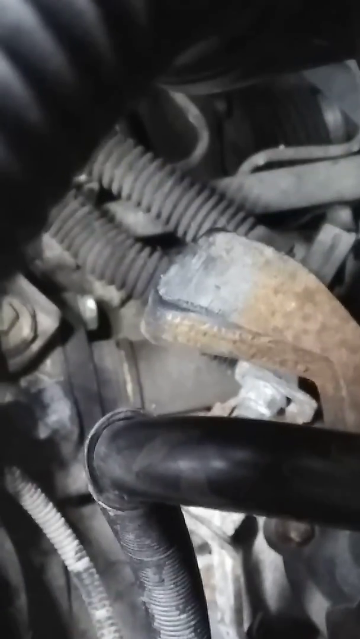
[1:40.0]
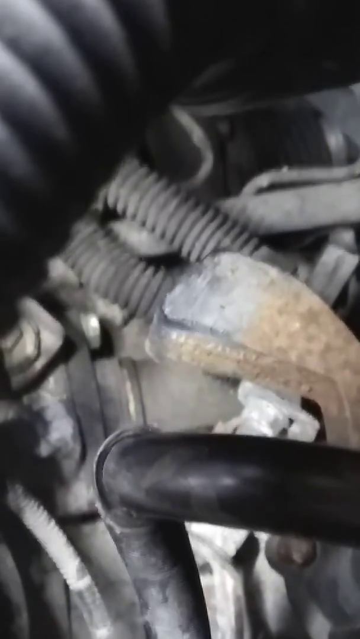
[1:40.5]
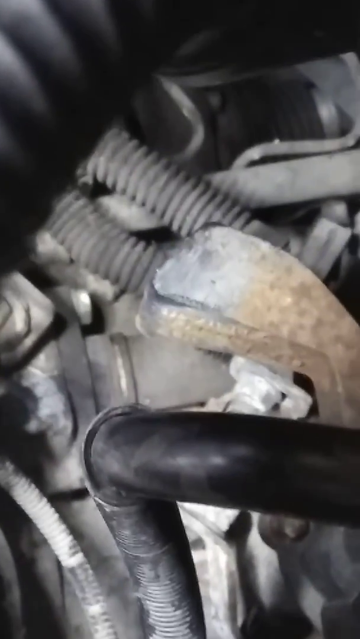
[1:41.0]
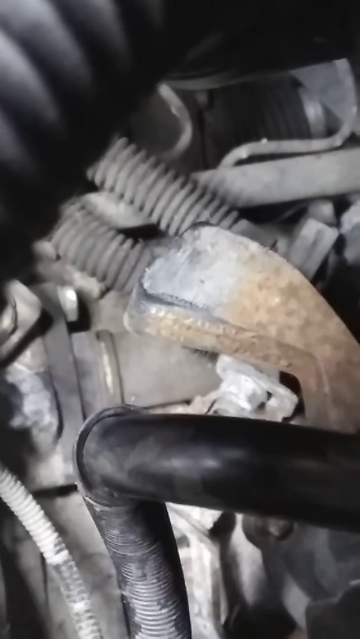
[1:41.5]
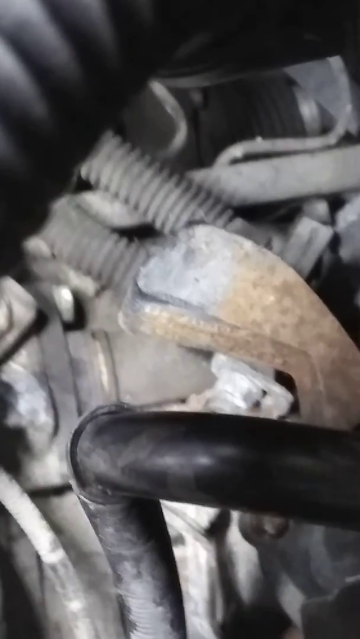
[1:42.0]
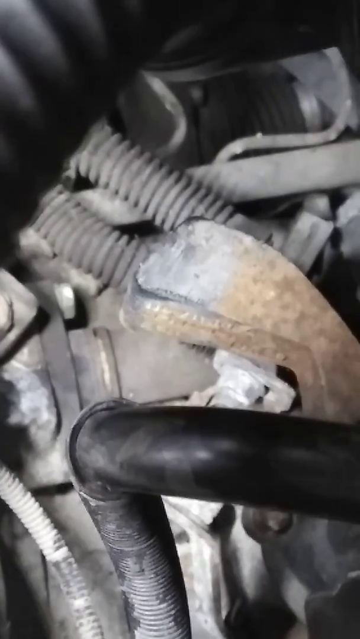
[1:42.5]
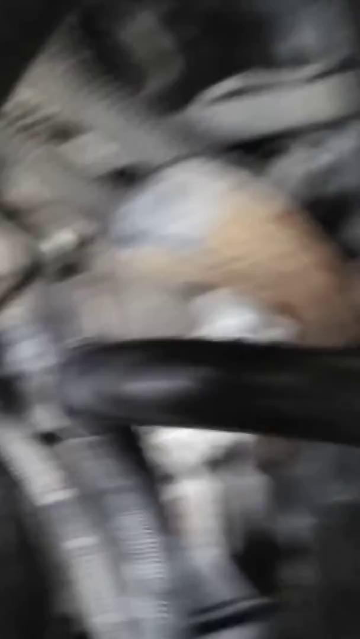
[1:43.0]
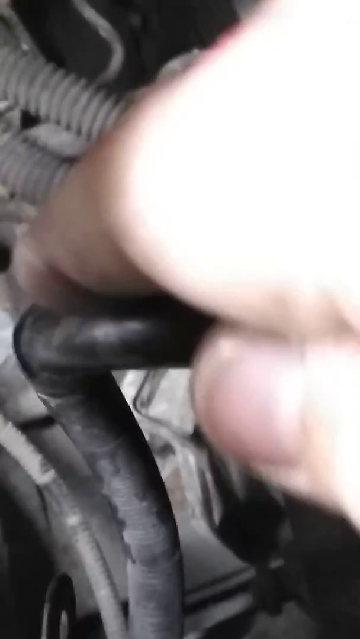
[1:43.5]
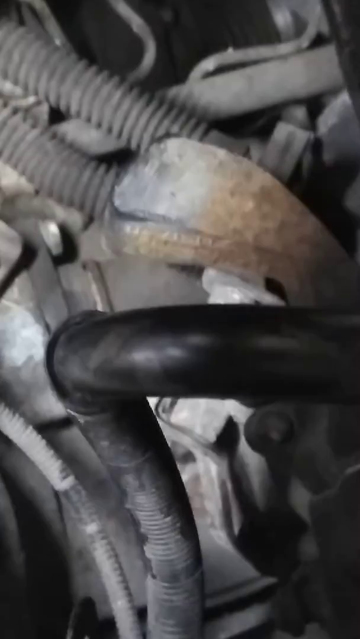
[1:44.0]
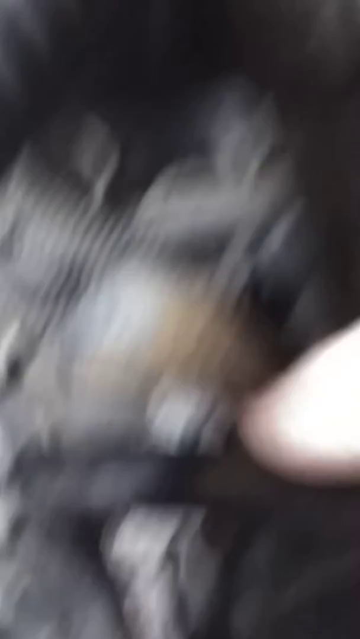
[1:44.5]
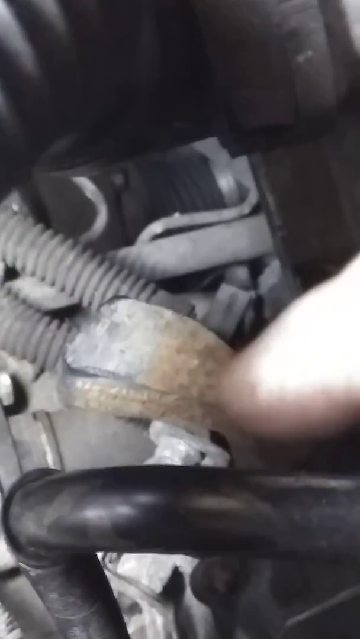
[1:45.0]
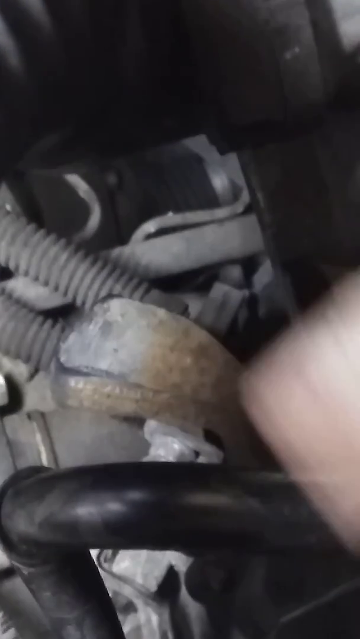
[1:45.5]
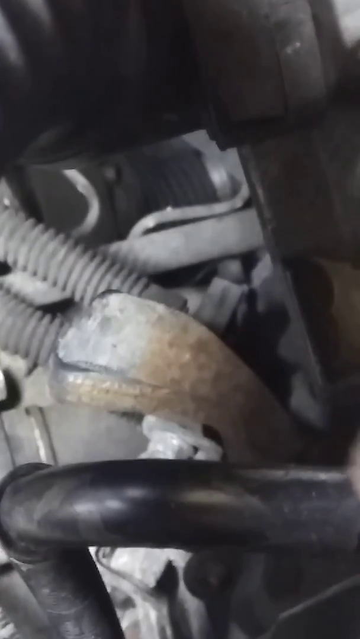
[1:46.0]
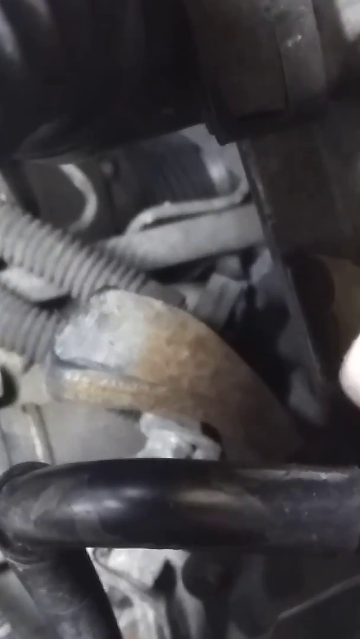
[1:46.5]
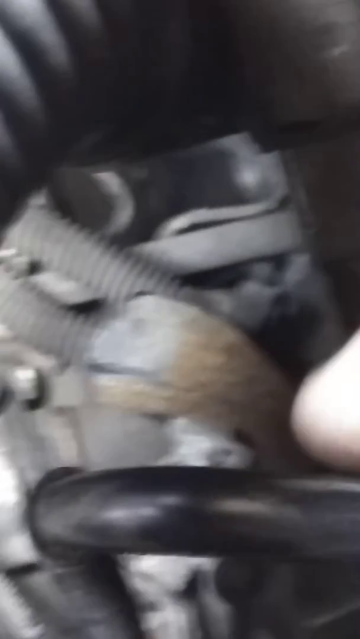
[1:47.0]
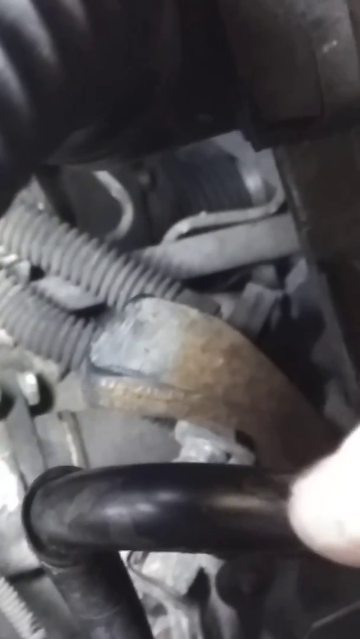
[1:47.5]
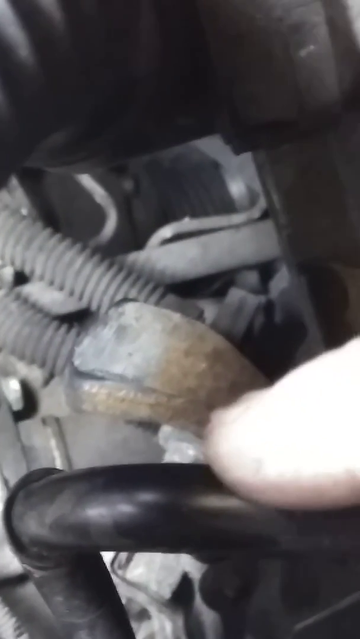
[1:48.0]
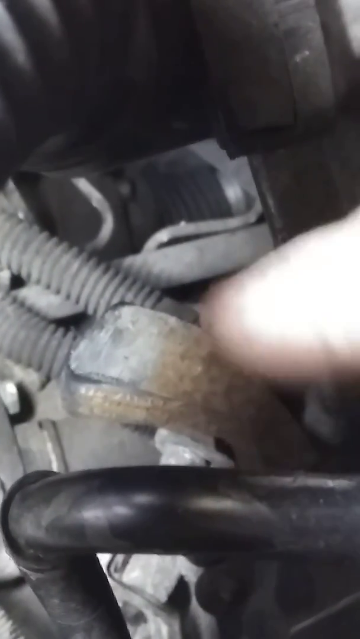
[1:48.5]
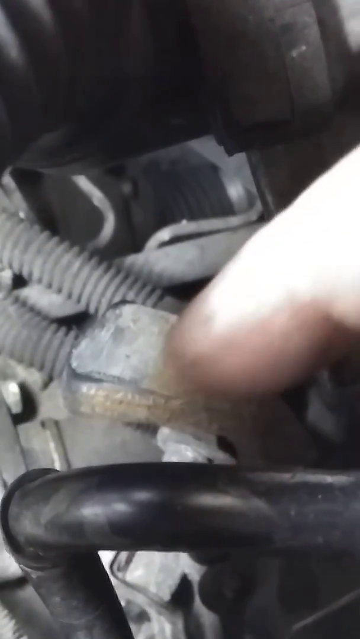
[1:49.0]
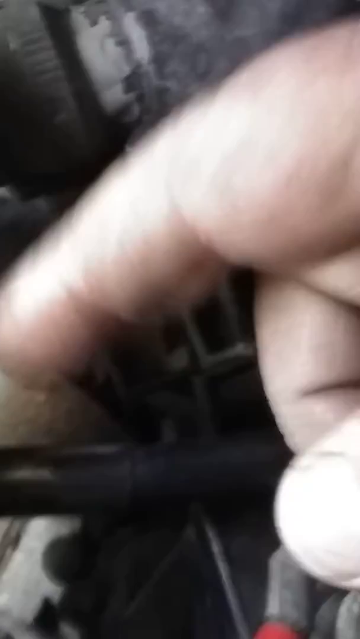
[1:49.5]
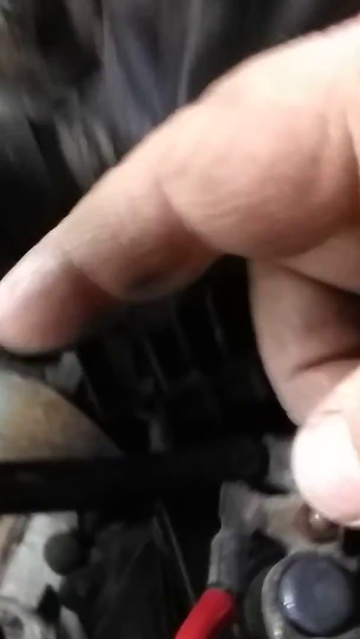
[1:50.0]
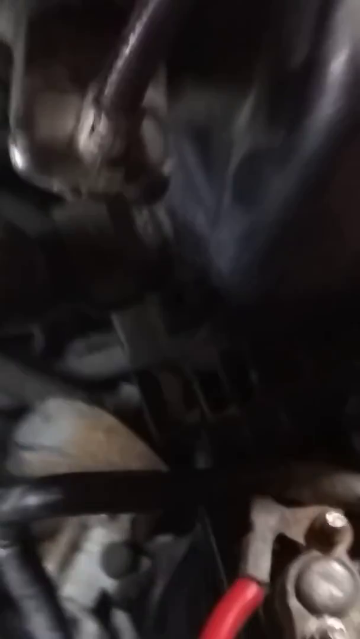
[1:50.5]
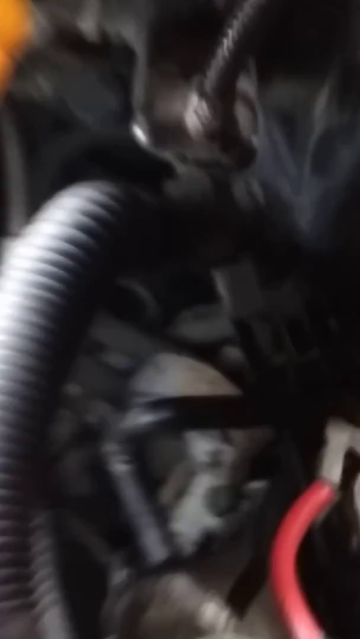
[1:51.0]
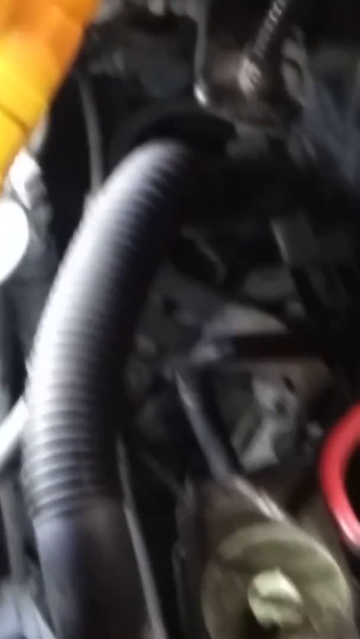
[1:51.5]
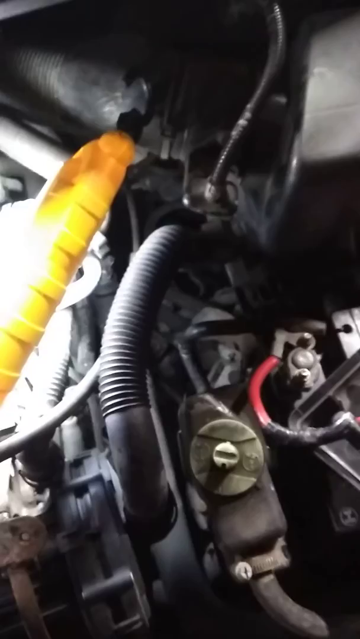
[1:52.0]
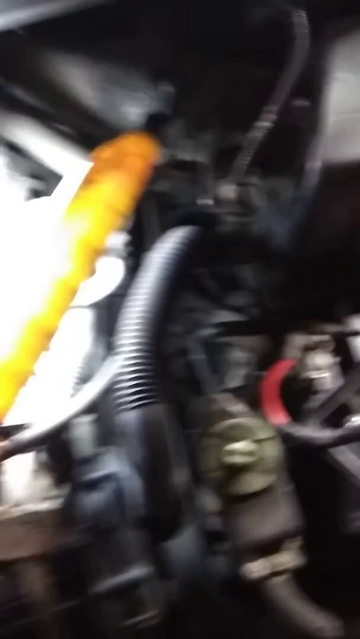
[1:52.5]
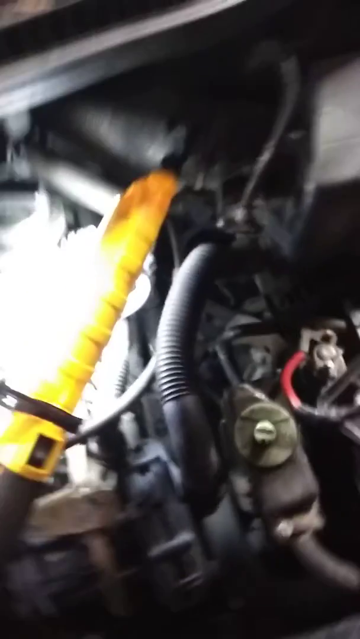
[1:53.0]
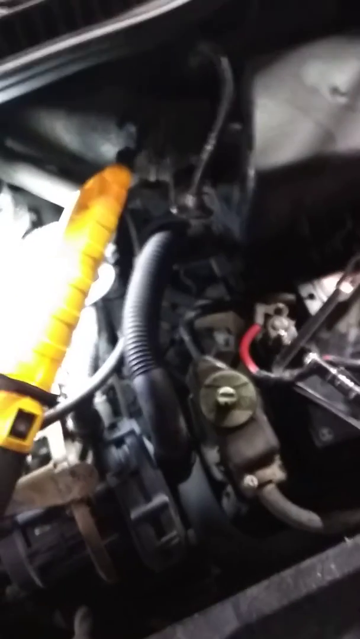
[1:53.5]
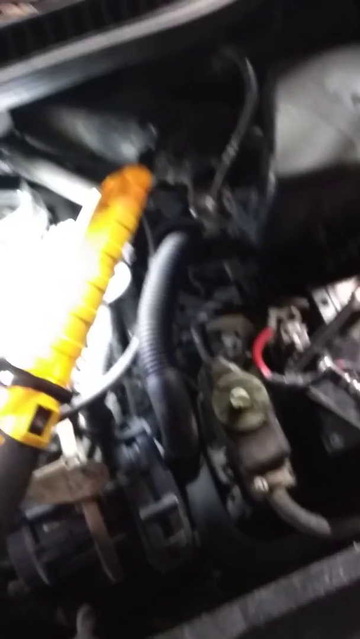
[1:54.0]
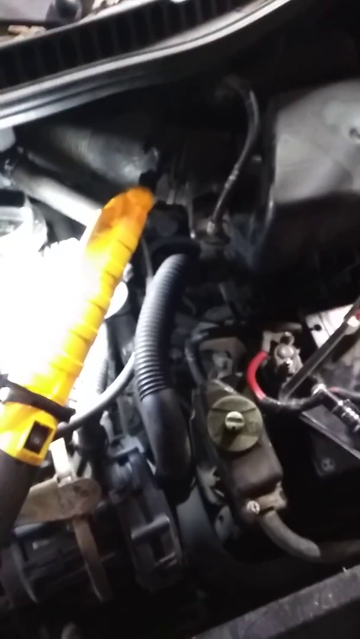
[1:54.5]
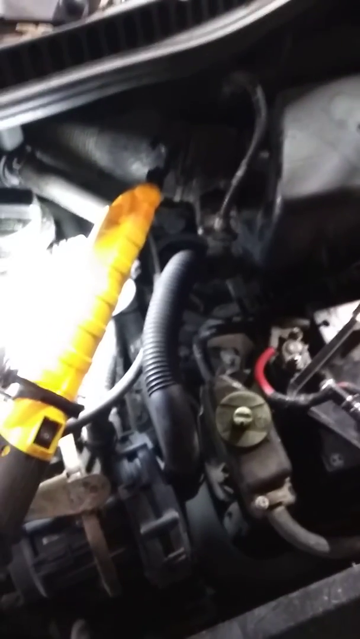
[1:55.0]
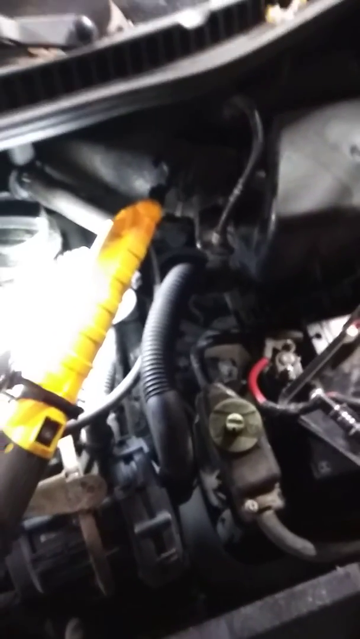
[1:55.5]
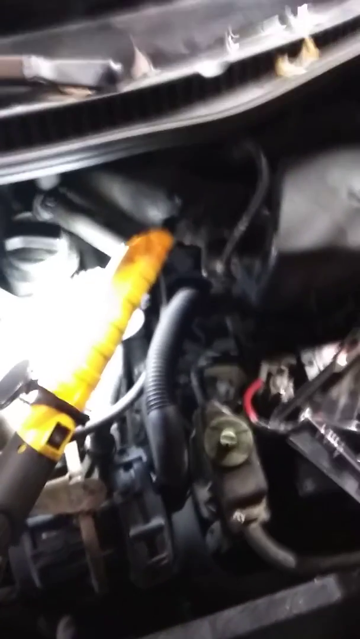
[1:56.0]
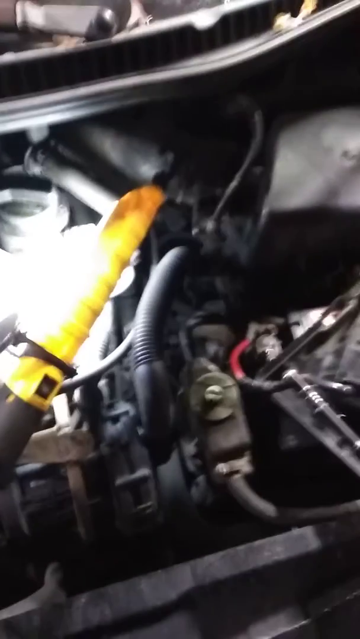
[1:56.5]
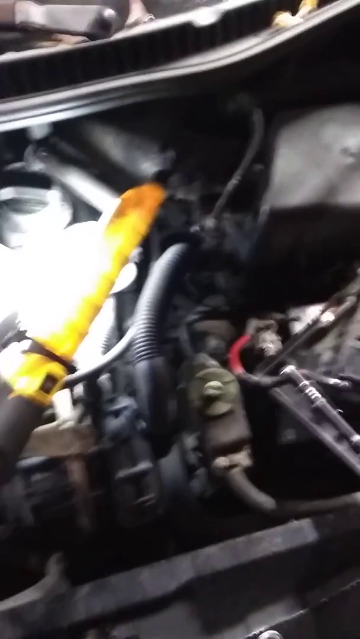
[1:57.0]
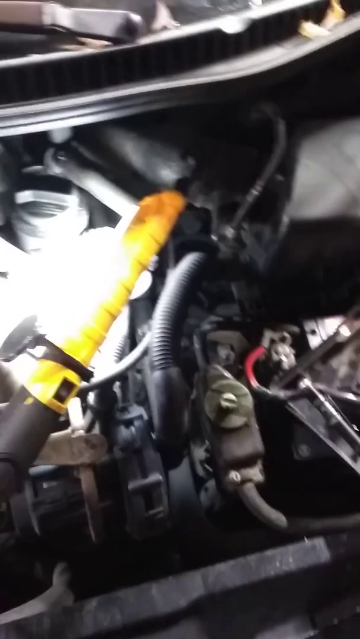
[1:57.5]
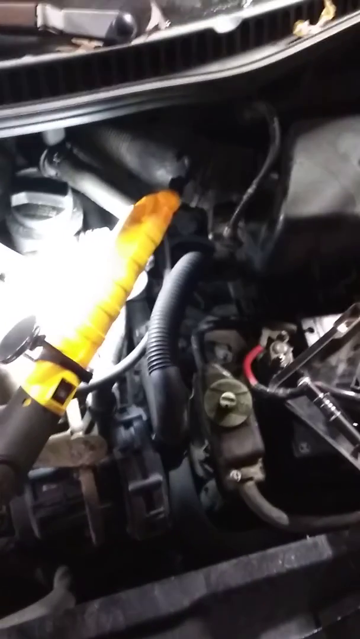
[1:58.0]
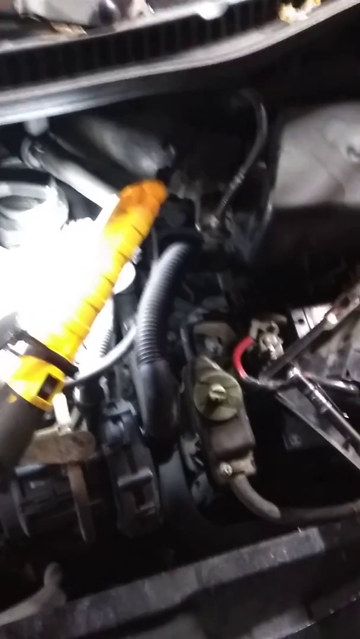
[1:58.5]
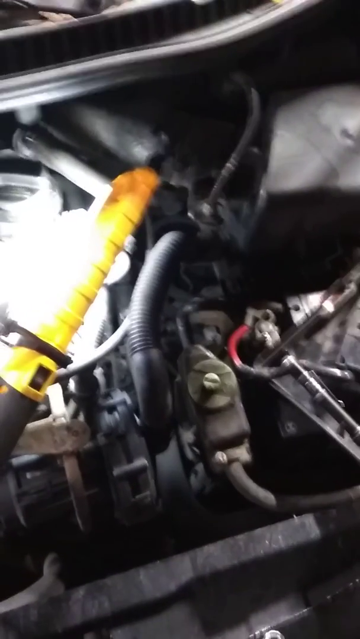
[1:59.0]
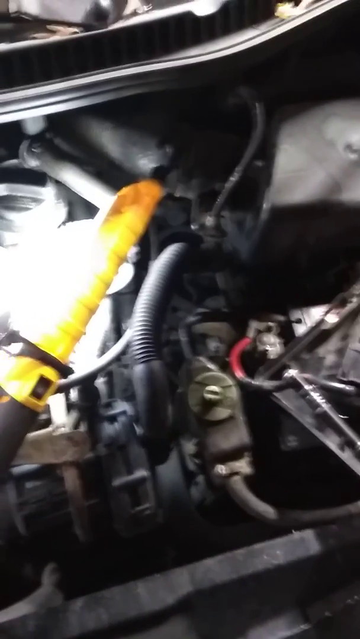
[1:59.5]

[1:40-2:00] The camera continues to focus on the lower level of the engine, staying pretty still but with some light vibration and movement from being held in the hand while zoomed in. The man holds the camera with his left hand and points with his right hand at different parts of the engine. His hand is seen a little closer; it looks poorly maintained, without much moisturiser, and looks like an old person's hand. The camera zooms out again to show a general overview of the engine. At the bottom of the screen is a small vertical rectangular cuboid box with a grey circle in the middle and a smaller grey circle on top of that; from its base, a pretty thick tube comes out and runs off to the right-hand side. On the left of the engine, the overhead light shining down creates a significant glare, apparently because the surface is very shiny.